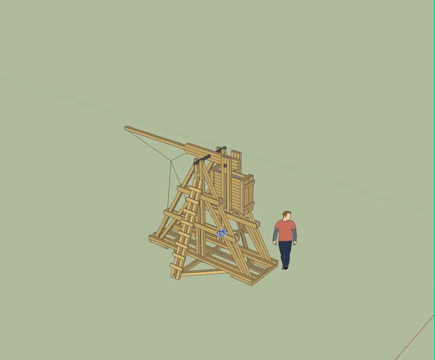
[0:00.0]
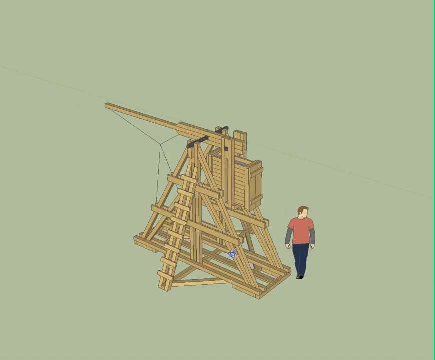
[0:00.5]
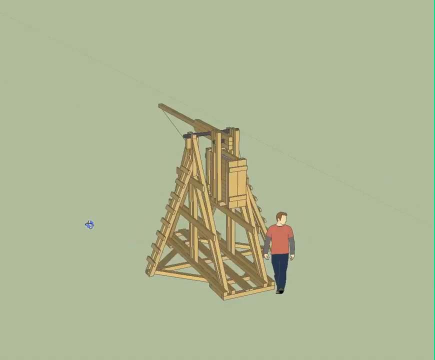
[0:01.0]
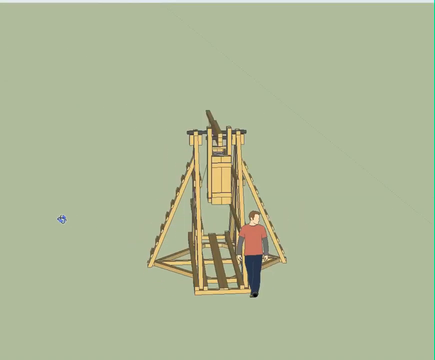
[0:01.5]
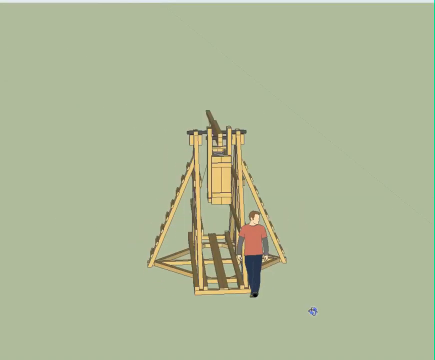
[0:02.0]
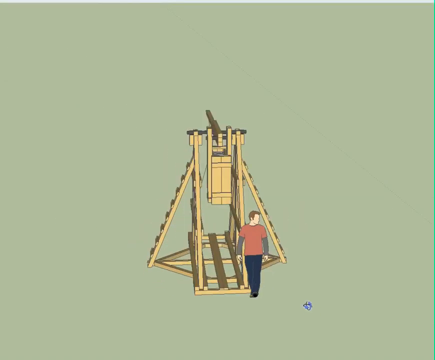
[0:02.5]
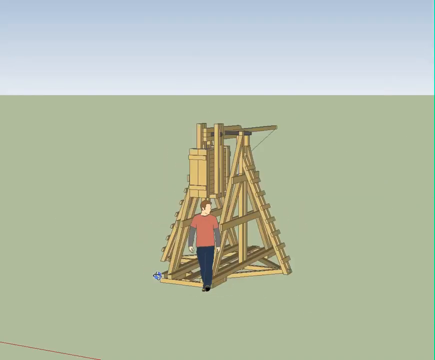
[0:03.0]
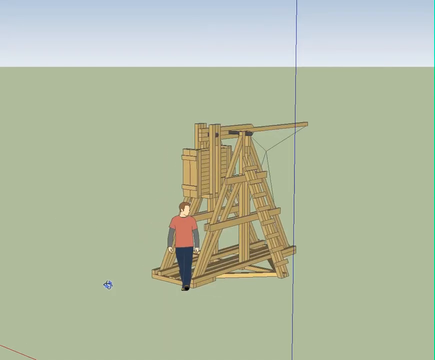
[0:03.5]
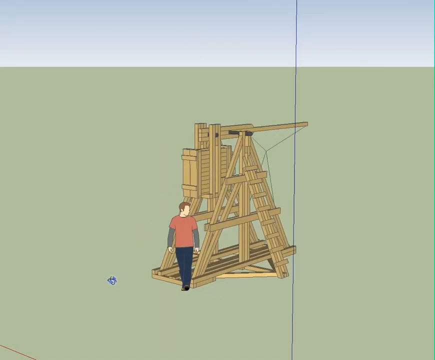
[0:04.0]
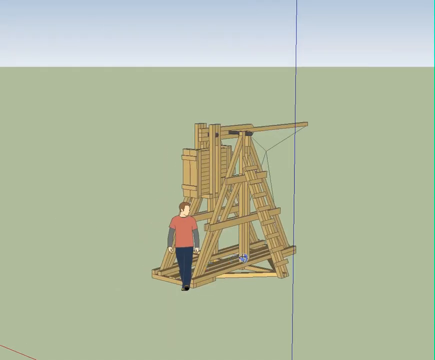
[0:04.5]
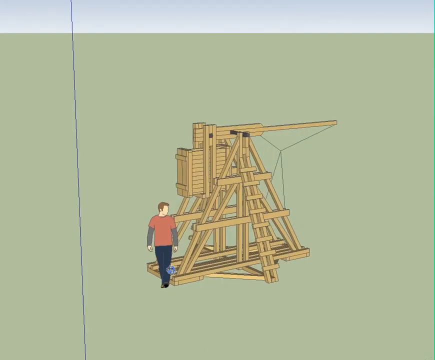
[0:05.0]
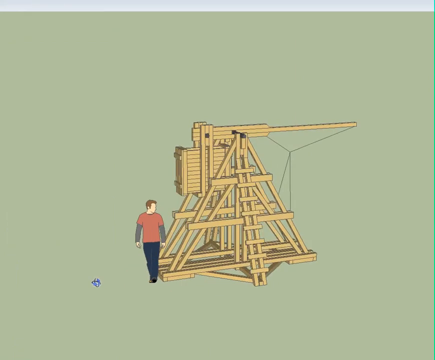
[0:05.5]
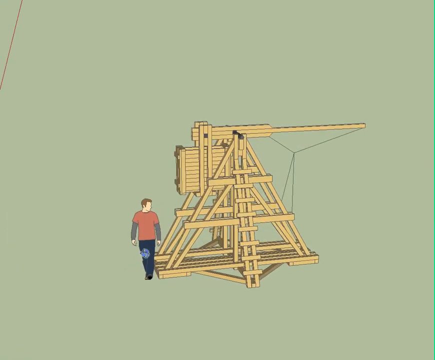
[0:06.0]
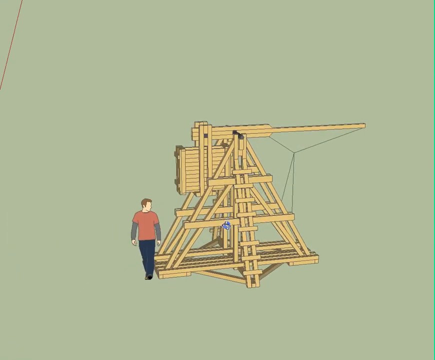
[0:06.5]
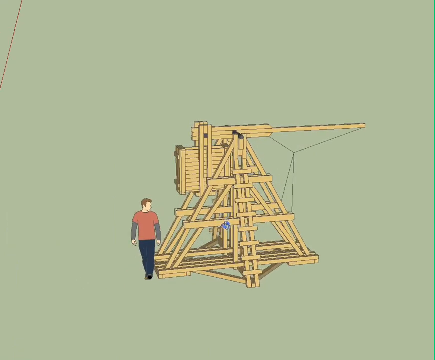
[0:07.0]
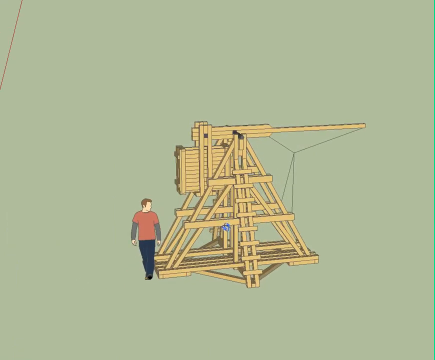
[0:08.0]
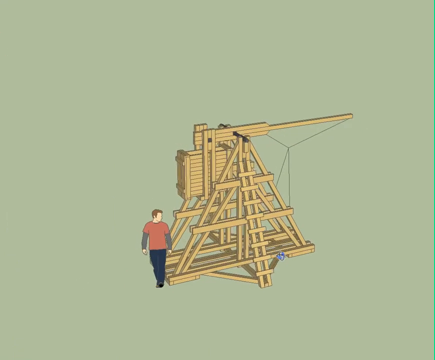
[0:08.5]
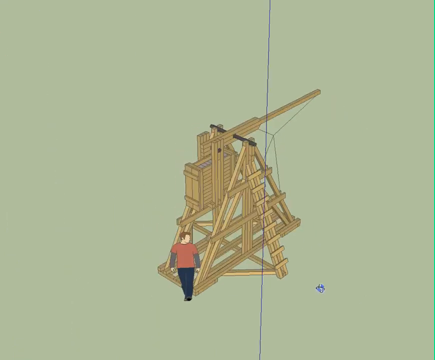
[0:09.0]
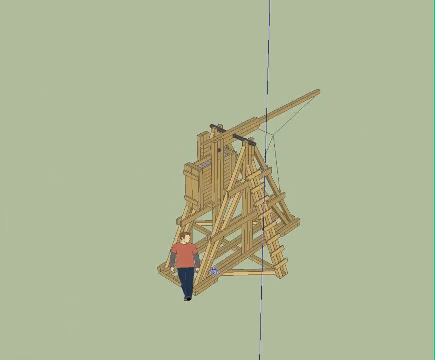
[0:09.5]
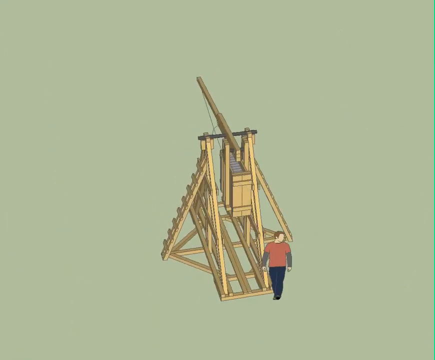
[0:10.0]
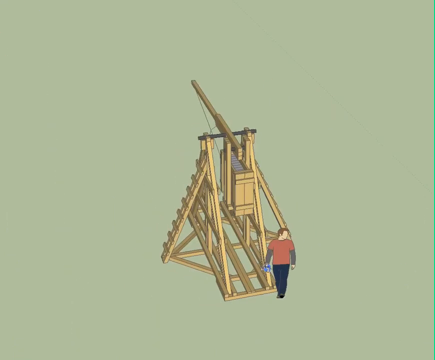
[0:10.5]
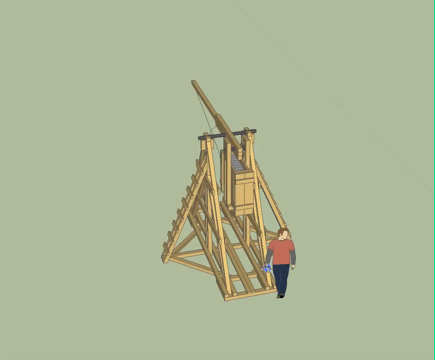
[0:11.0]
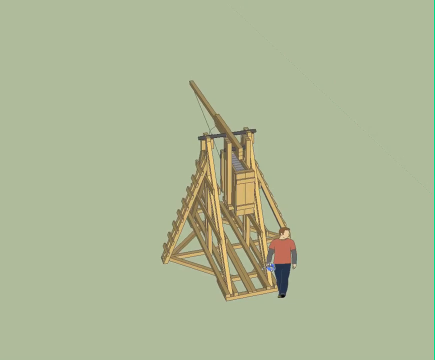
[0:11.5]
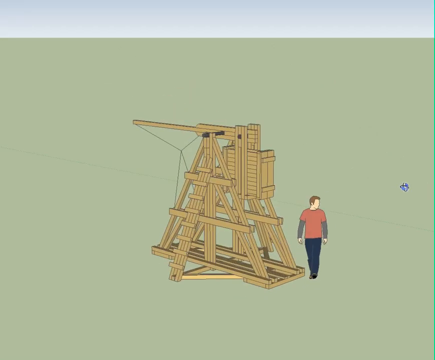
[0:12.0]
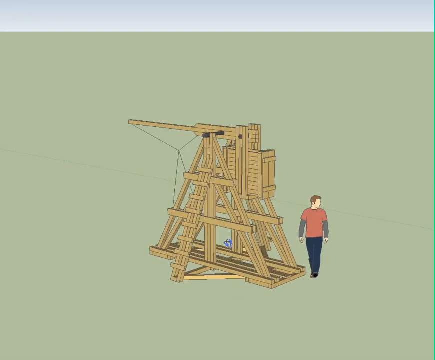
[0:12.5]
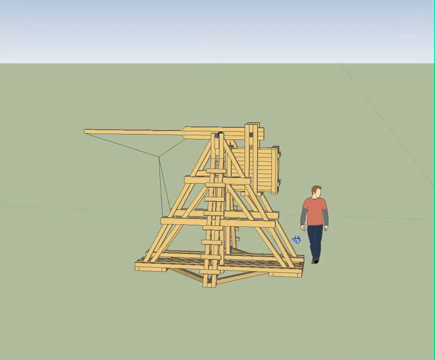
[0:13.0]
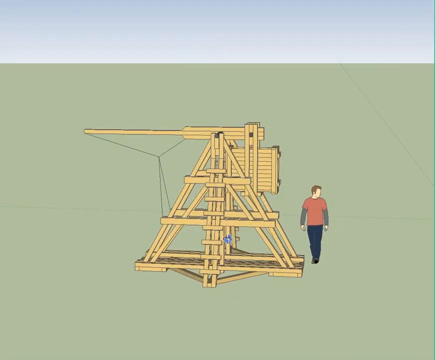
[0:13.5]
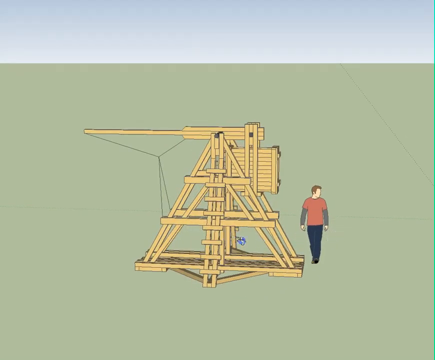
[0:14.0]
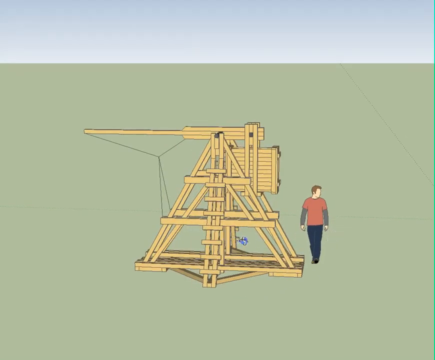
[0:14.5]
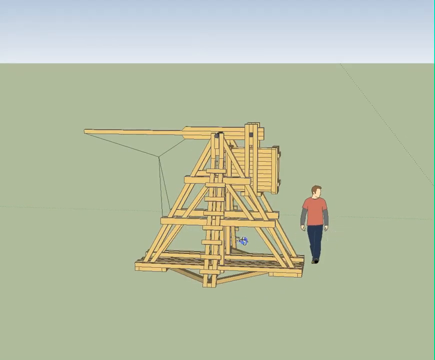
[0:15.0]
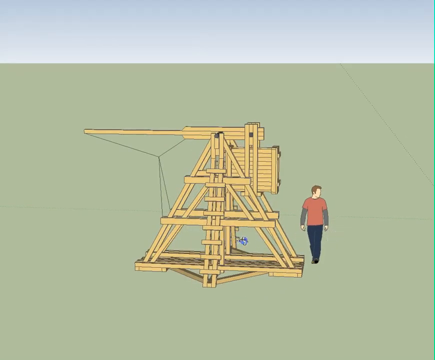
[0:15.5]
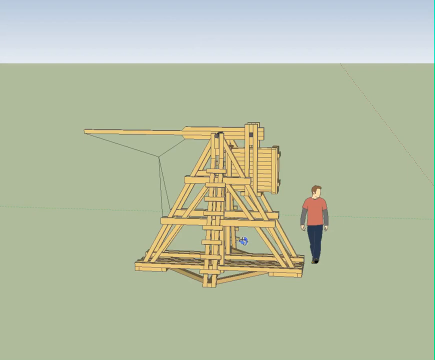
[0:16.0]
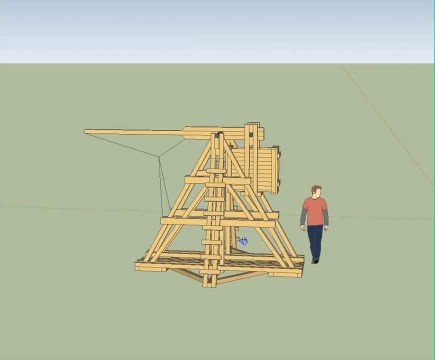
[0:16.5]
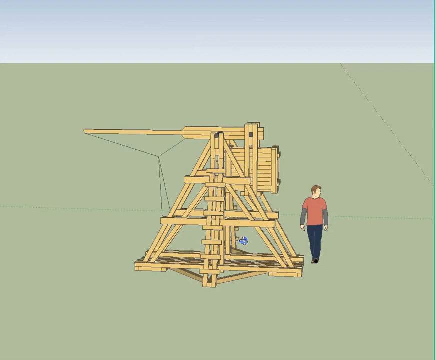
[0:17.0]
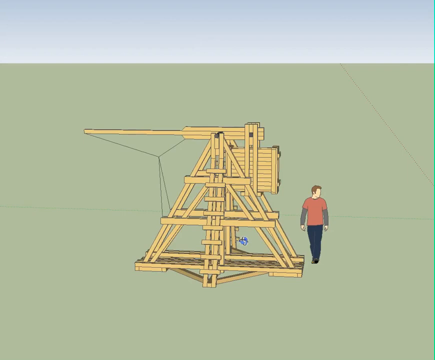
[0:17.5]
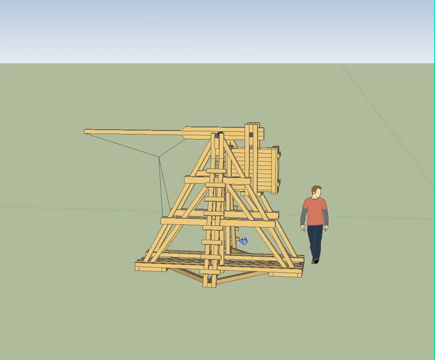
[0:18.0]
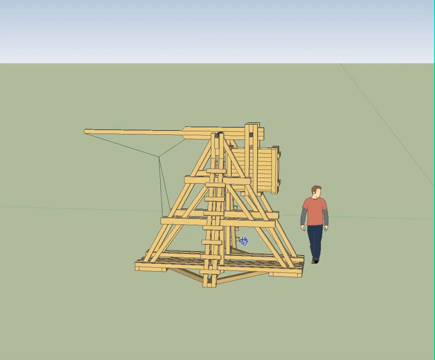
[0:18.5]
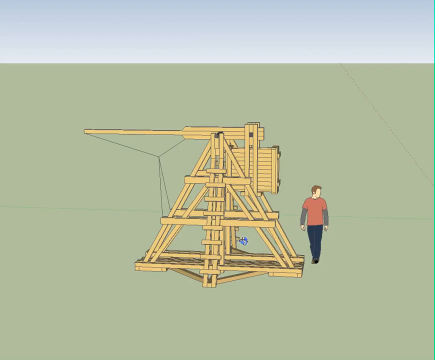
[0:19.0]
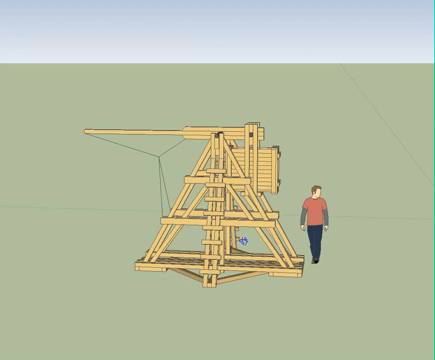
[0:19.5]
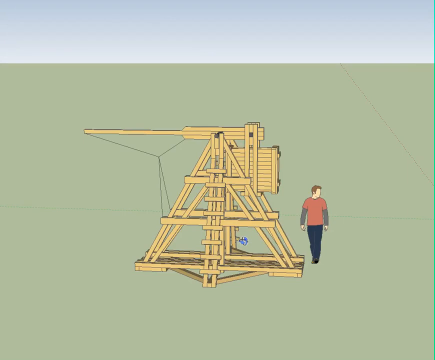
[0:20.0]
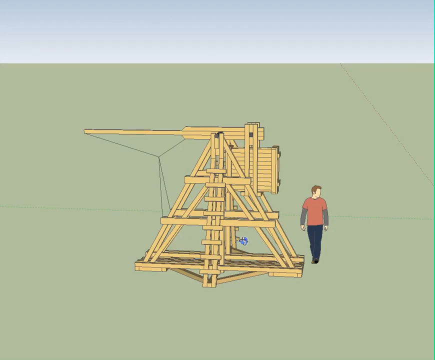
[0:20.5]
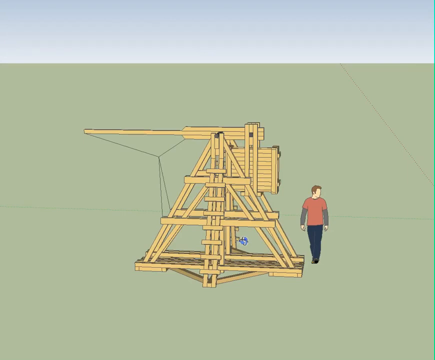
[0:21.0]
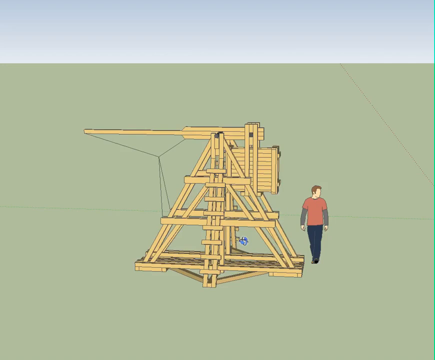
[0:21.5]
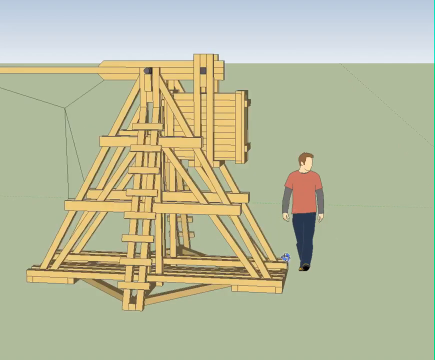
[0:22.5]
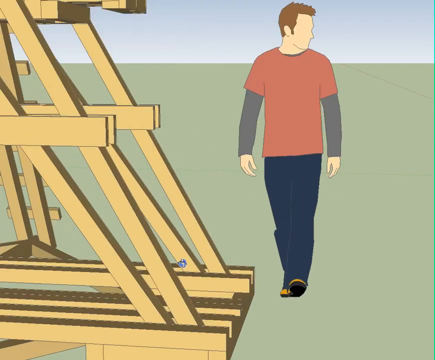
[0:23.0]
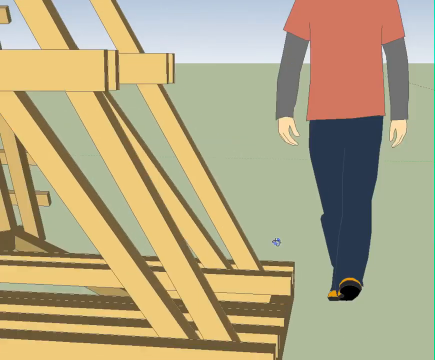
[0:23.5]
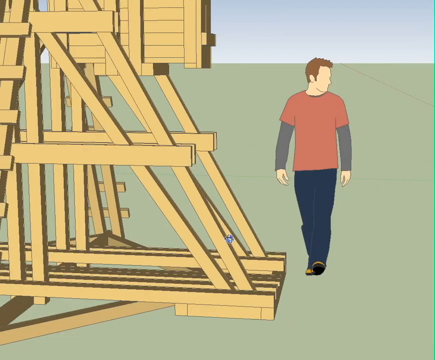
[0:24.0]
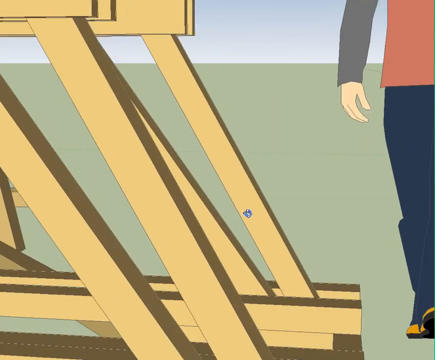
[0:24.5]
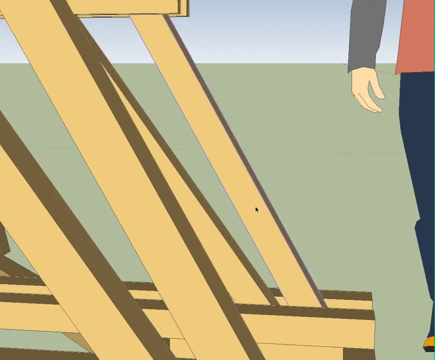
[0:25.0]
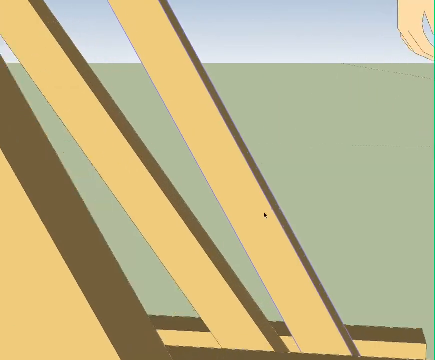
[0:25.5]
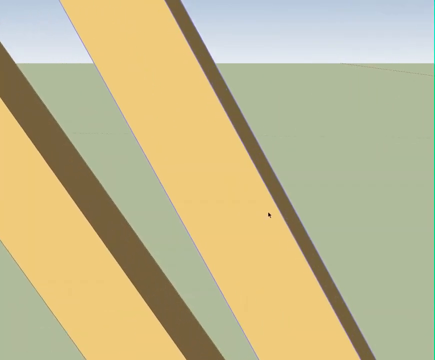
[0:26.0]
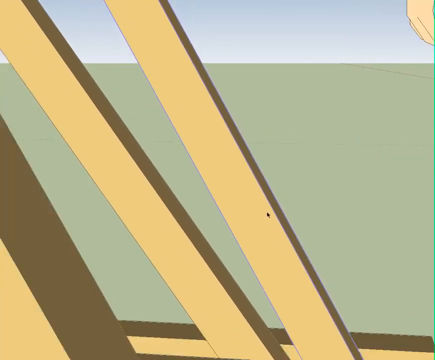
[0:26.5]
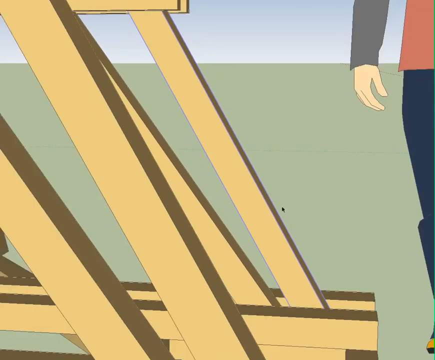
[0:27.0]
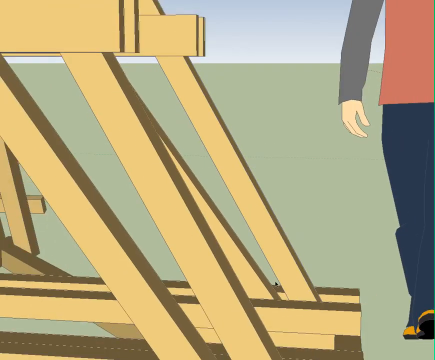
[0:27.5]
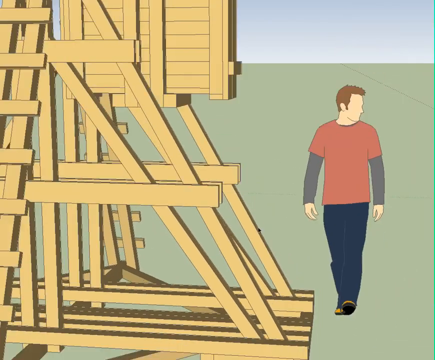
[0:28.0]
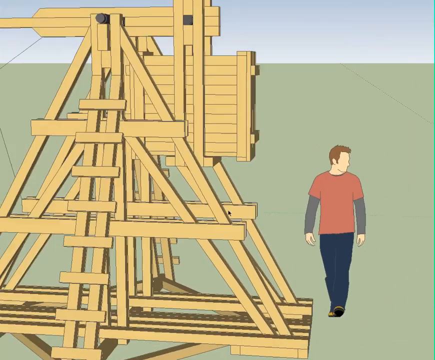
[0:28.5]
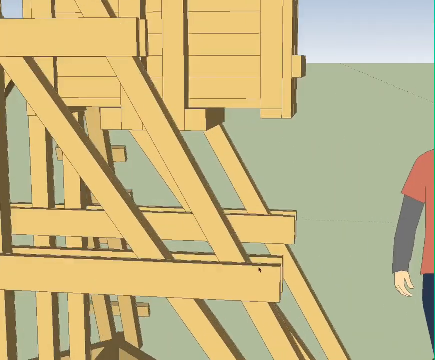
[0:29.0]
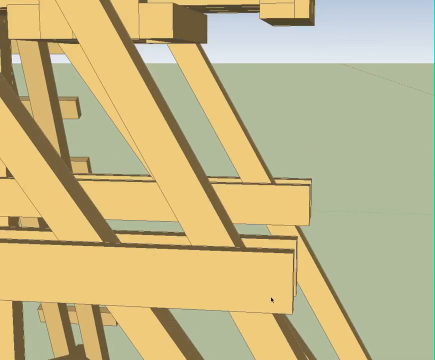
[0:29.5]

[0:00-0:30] The video is done in a cartoon style rather than live action. A cartoon man wears a red shirt with gray and what looks like blue pants. There is a wooden contraption that appears to have a little ladder and a base. A computer image is constructing it from lumber and wood pieces; it kind of looks like a machine gun, with what looks like a gun barrel. The view gets close and a cursor comes up, moving in and out to different pieces of the wood structure and turning it around. The blue cursor turns the wooden structure in circles, going from one side to the next, then goes over to the bottom, stays there for a second, comes back and gets very close. It takes a piece of lumber on the right side, gets close to it, comes back out and outlines it.